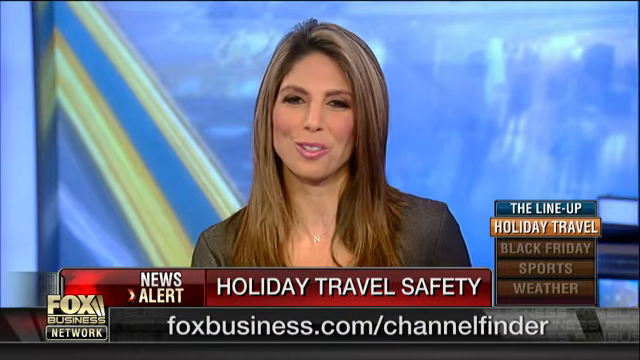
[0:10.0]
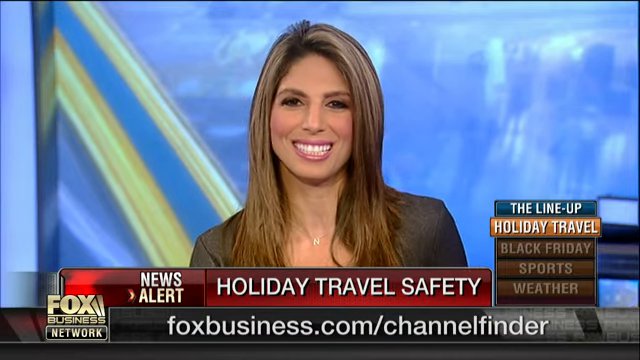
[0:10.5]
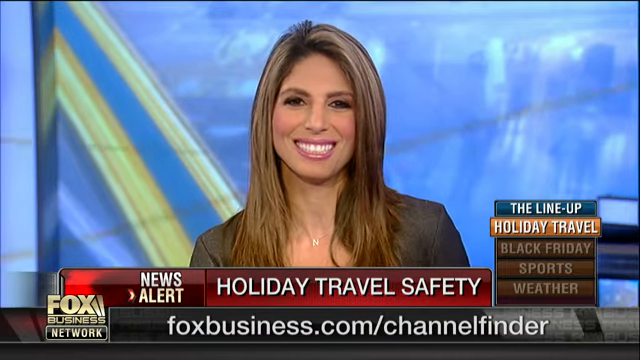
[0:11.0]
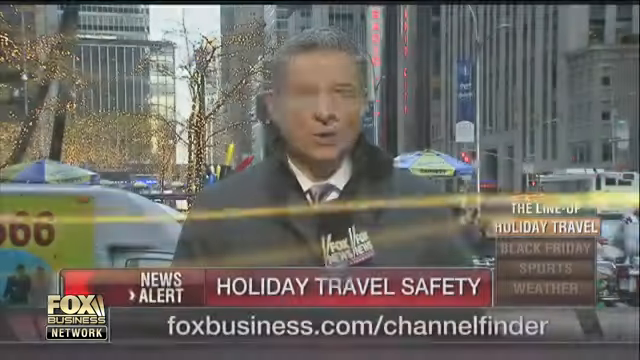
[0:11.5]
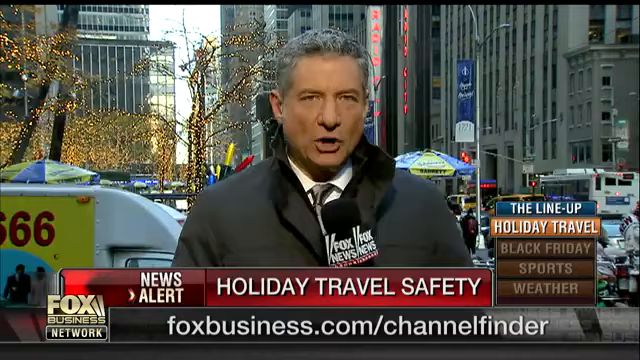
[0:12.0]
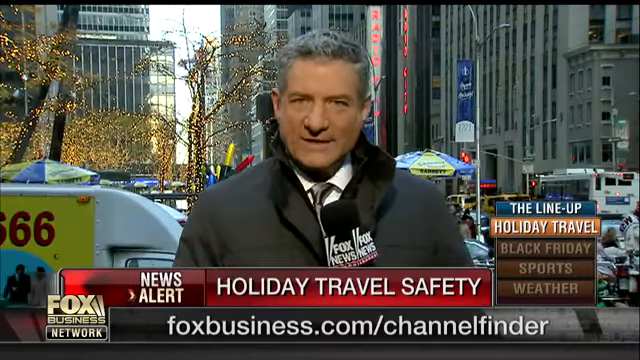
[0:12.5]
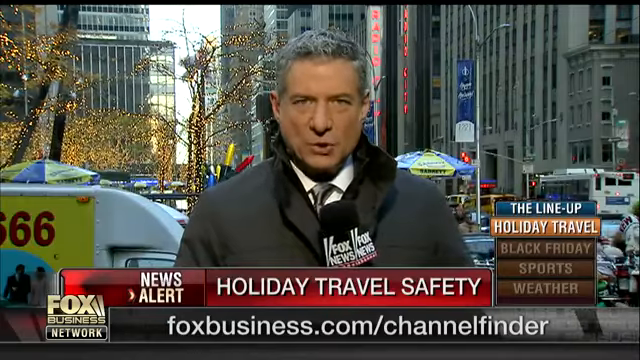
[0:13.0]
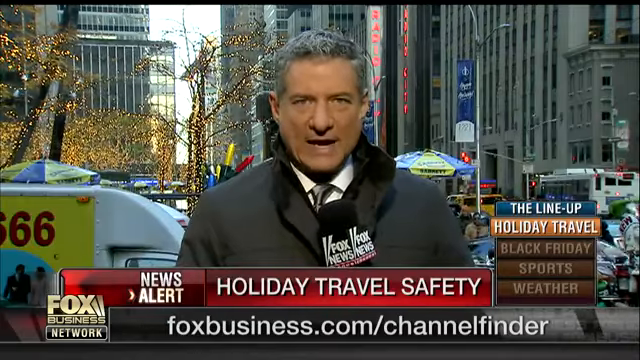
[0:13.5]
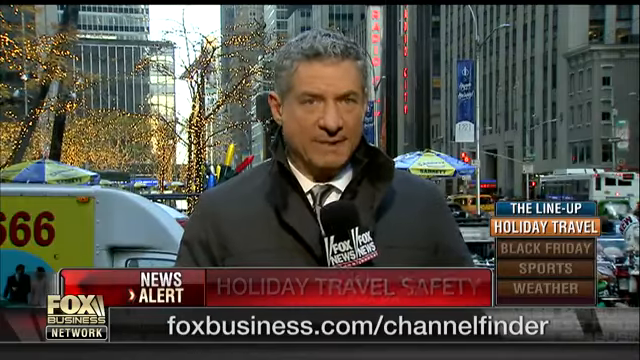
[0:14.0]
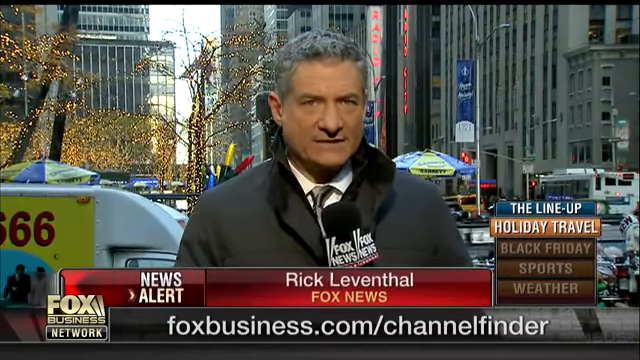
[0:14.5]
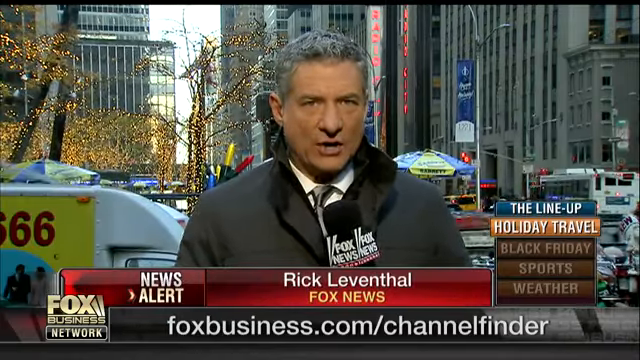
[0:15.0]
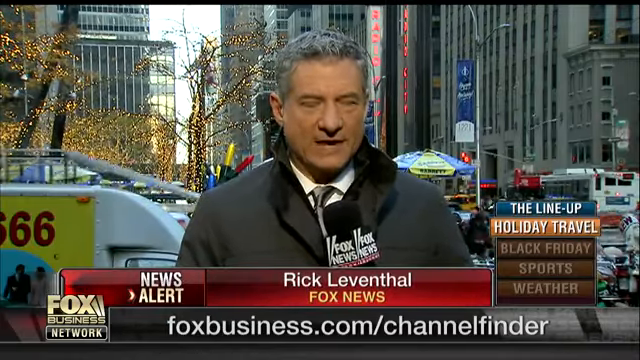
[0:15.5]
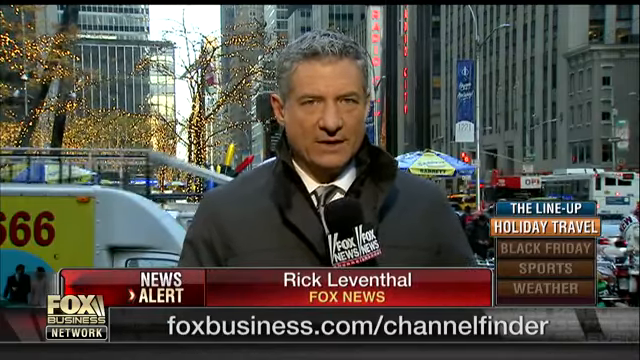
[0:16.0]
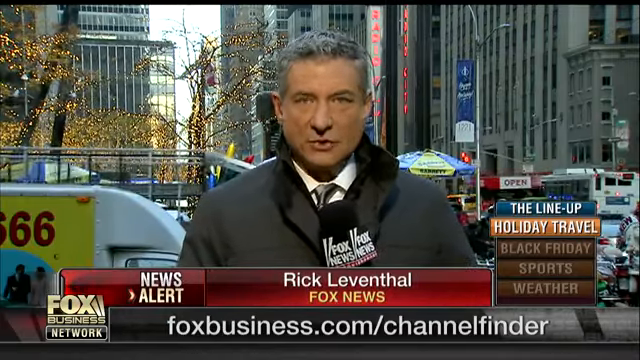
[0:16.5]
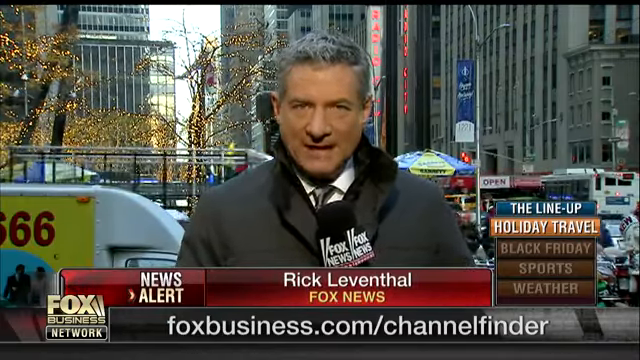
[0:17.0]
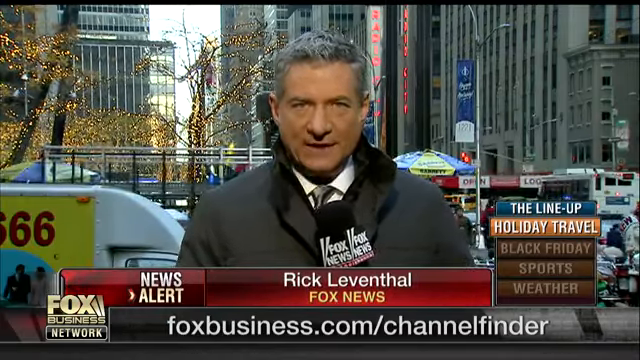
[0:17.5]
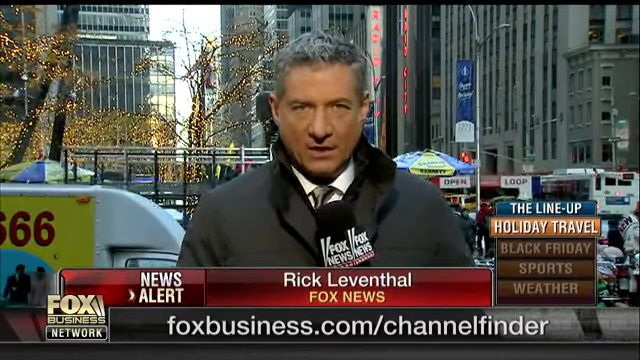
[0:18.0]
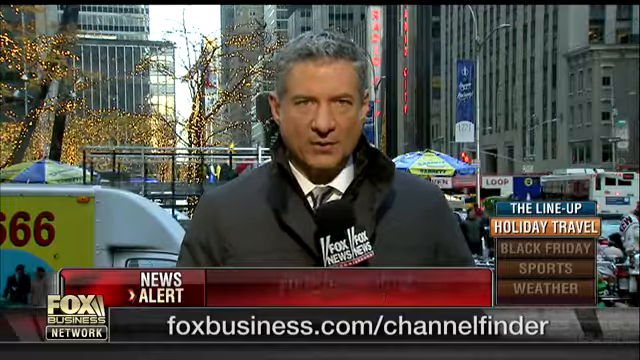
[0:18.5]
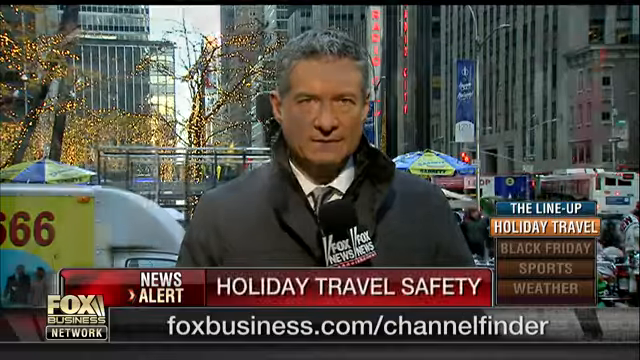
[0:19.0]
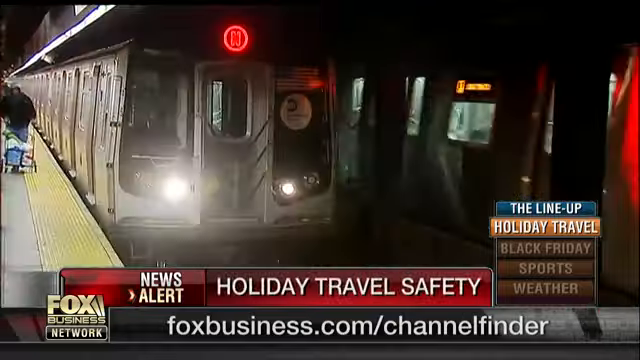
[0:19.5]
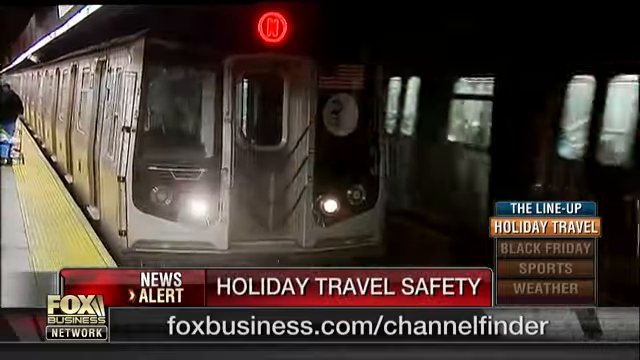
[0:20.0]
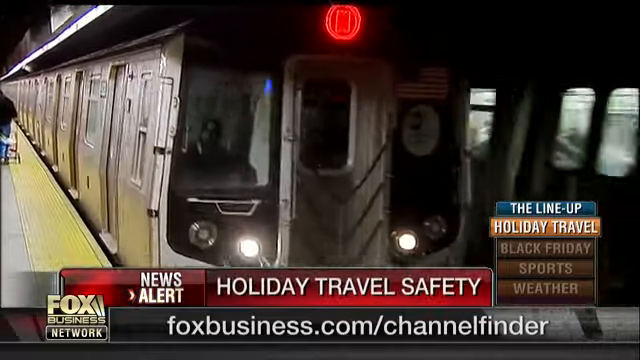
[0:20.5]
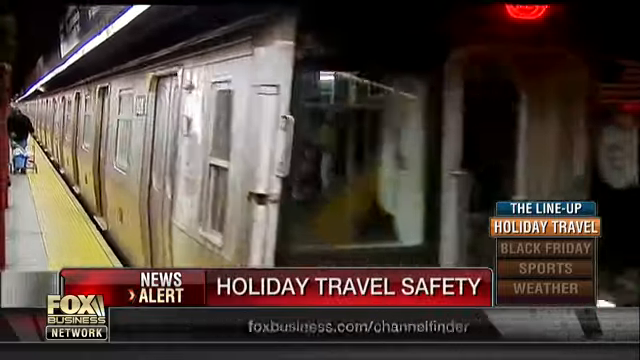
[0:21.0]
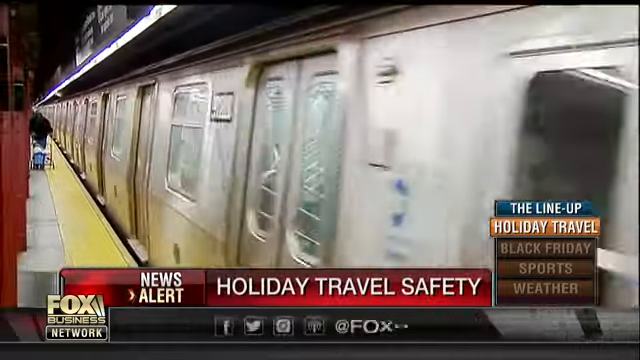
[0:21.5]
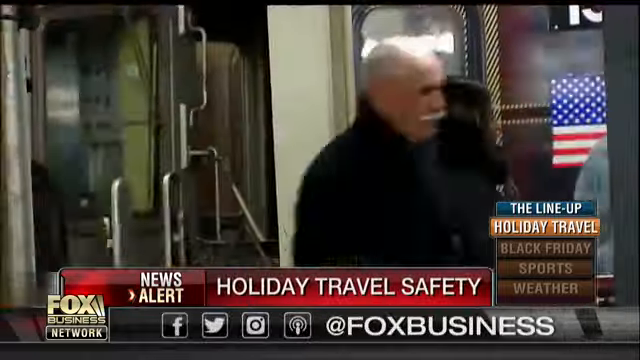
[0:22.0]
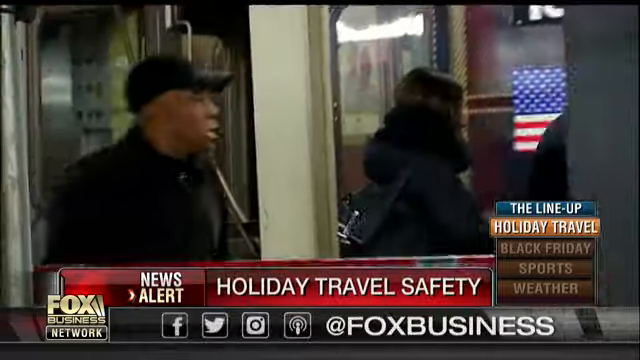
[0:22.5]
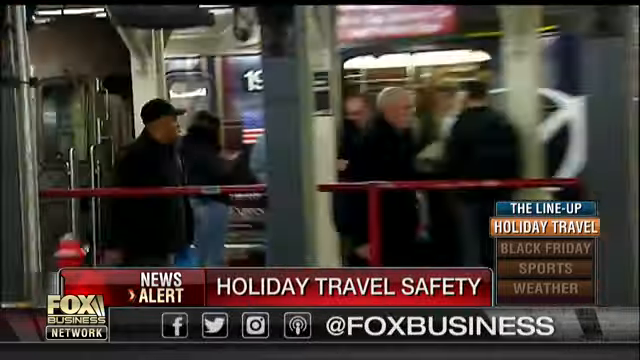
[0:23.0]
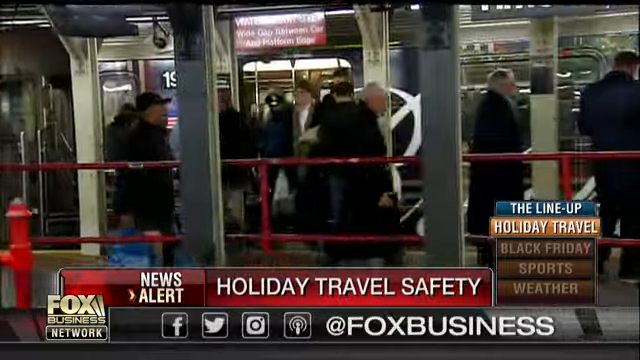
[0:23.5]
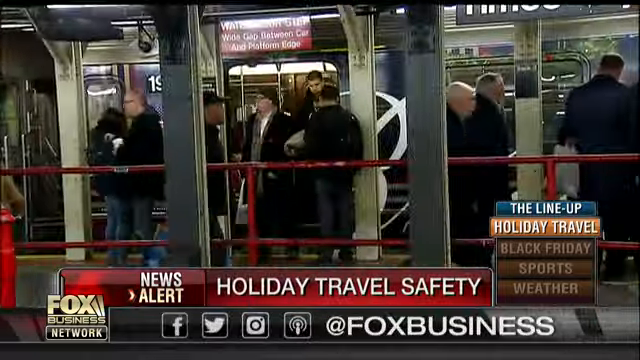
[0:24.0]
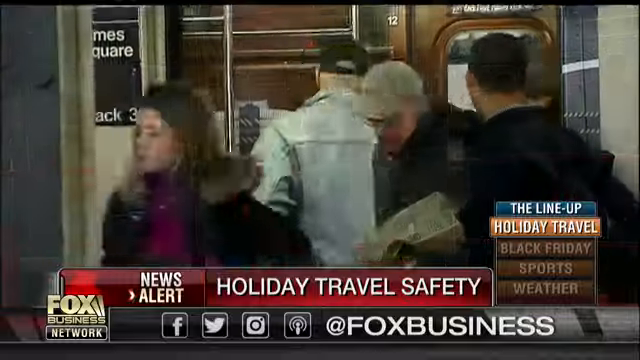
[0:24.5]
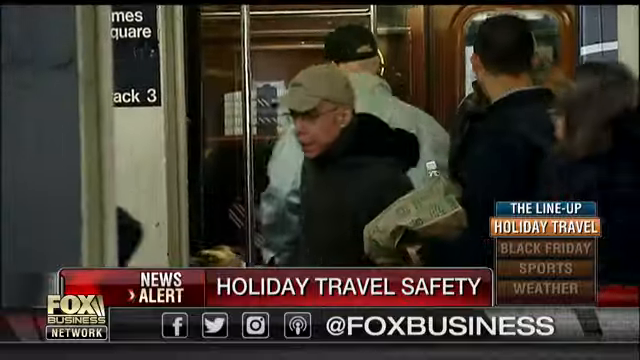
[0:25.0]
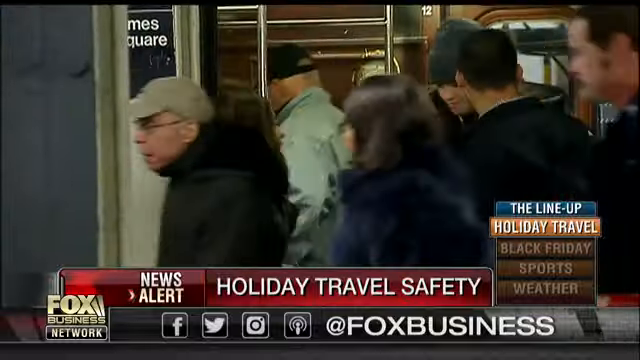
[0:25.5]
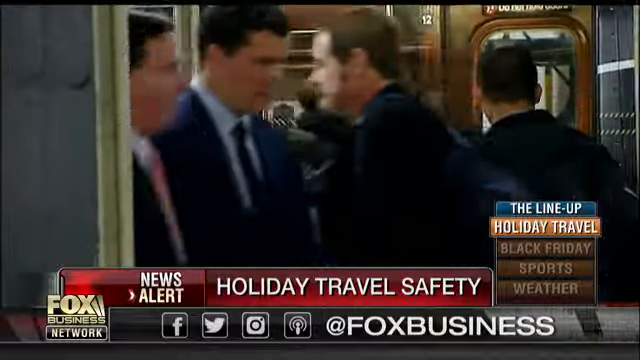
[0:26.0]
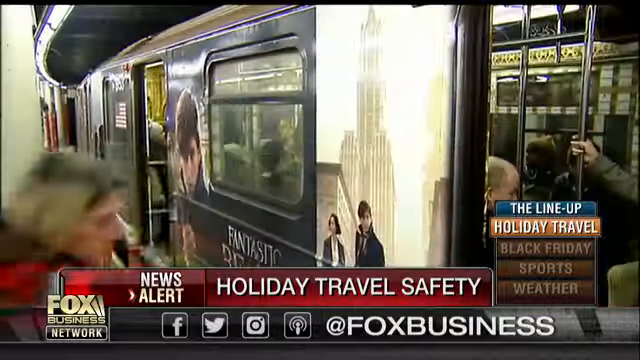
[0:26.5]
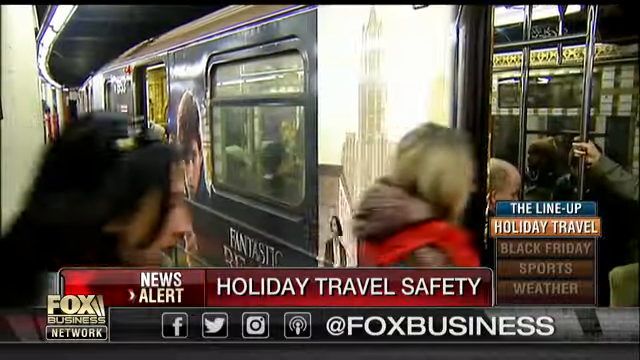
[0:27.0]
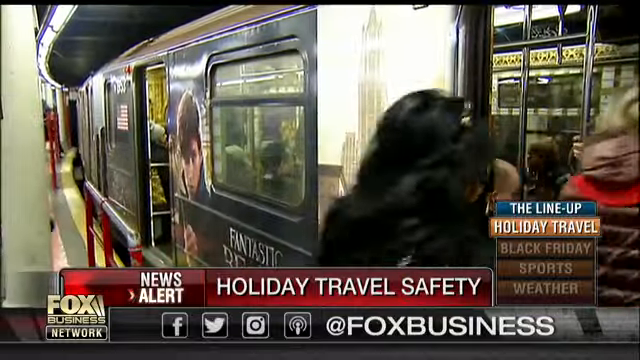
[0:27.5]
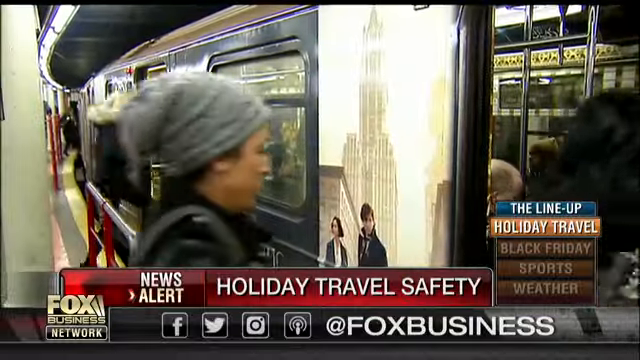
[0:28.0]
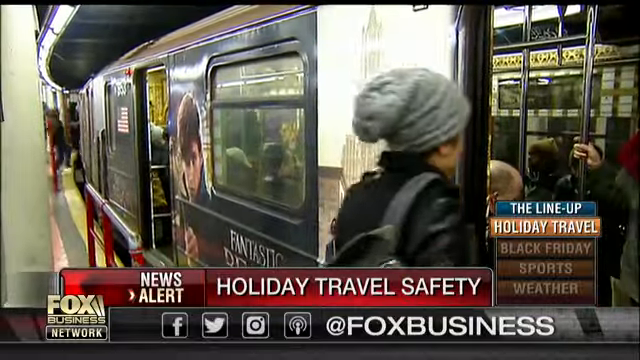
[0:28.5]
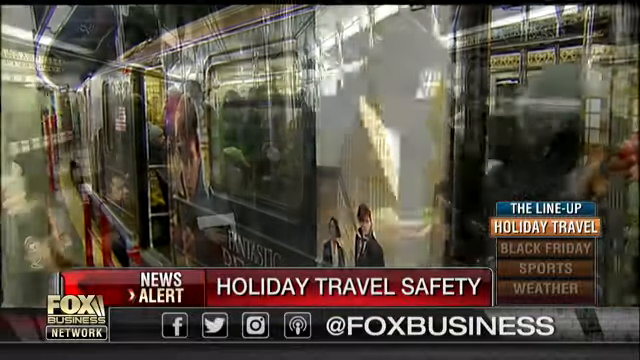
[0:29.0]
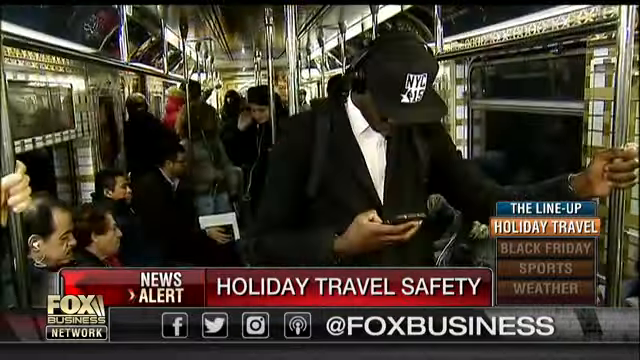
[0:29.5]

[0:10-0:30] A very beautiful female news presenter, happy and smiling, with brown highlighted hair worn down, perfectly done makeup and a brown top, is on screen. The screen behind her is blue with some yellow lines across it. The shot cuts to an older man, about 60, with grey hair, very well presented and wearing a big warm coat. He is in a very urban area and holds a microphone that says 'Fox news' on it. His name appears on the screen, showing he is reporting for Fox News. In the background are buses, traffic and a bustling city street. The video then cuts to the subway, where a train moves towards the screen, followed by a static shot of the train with people getting on and off. Finally the view is inside the subway train, where a man is on his mobile phone.